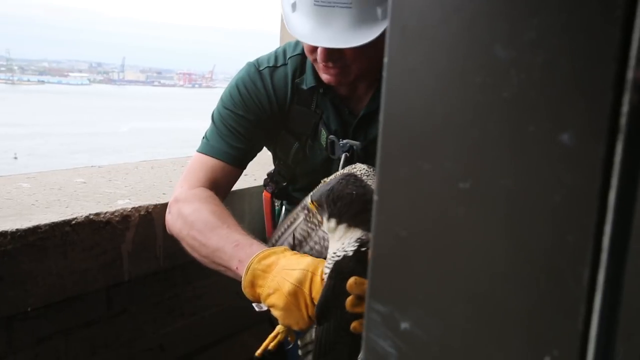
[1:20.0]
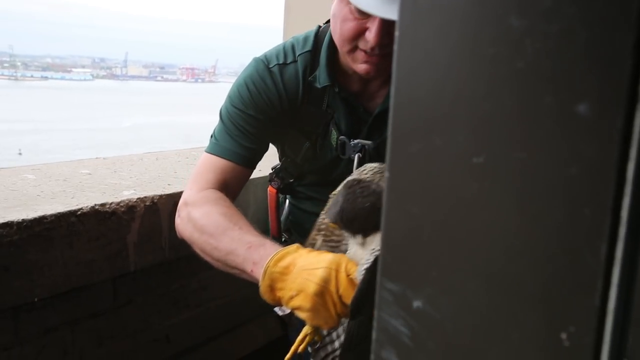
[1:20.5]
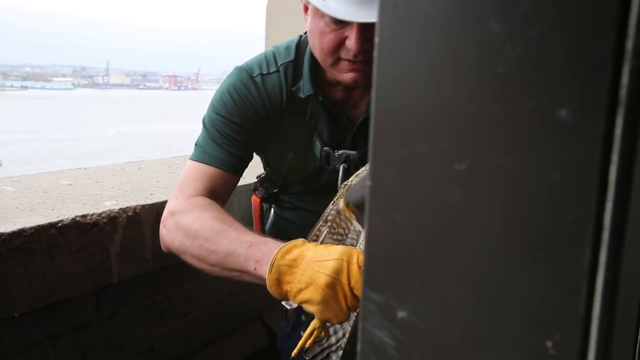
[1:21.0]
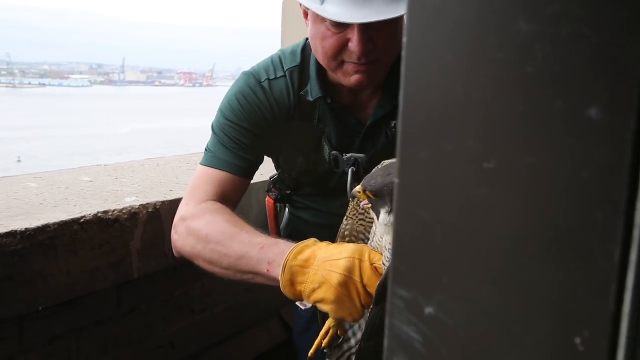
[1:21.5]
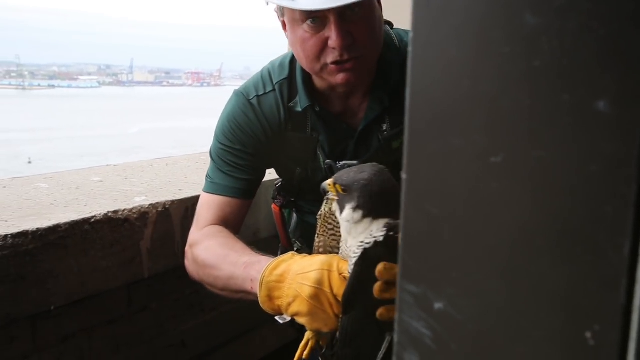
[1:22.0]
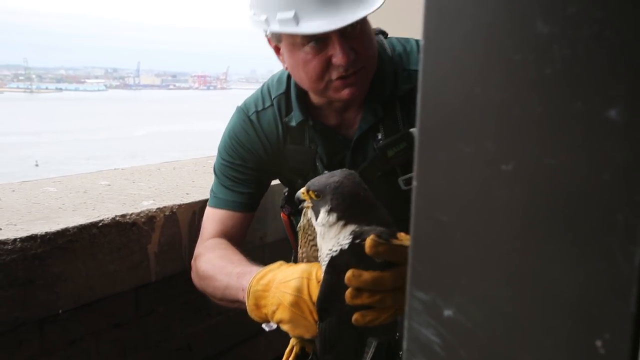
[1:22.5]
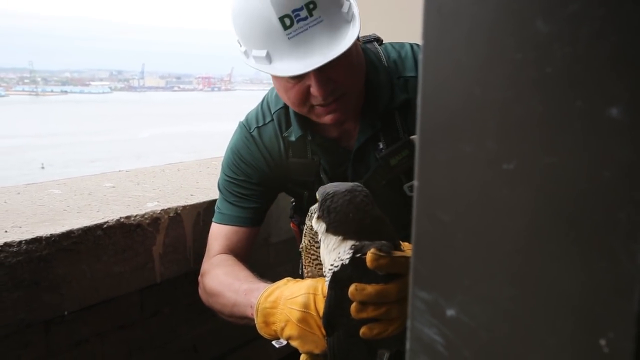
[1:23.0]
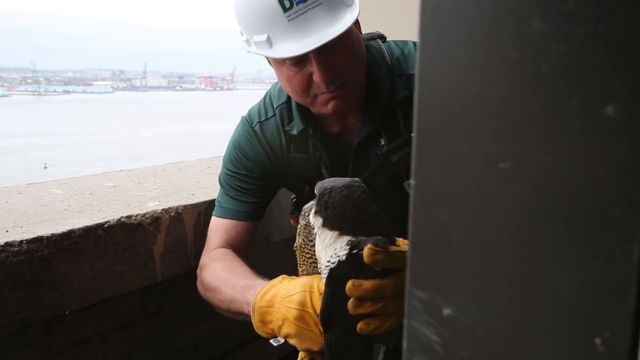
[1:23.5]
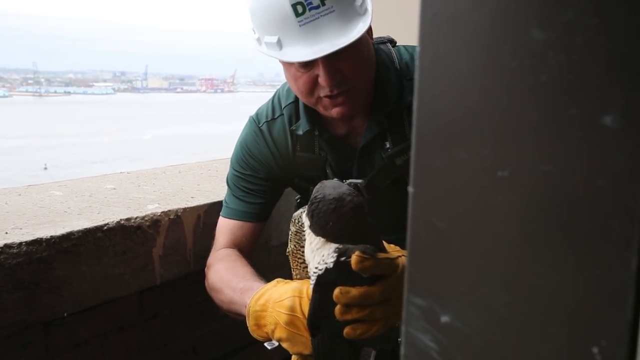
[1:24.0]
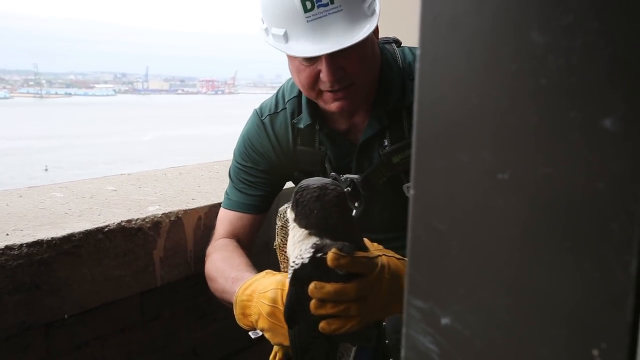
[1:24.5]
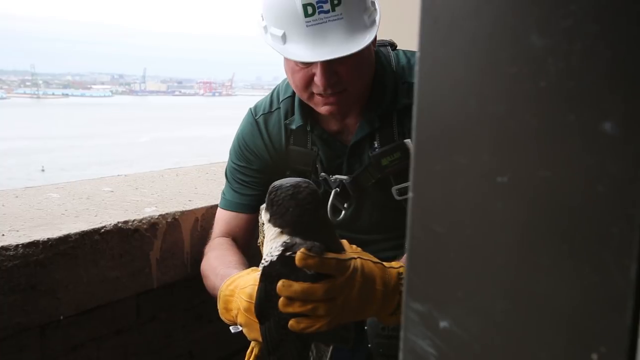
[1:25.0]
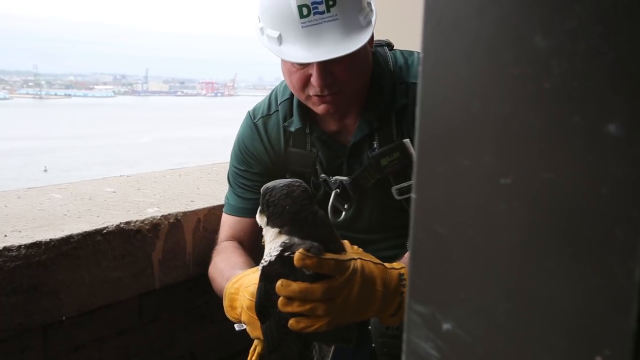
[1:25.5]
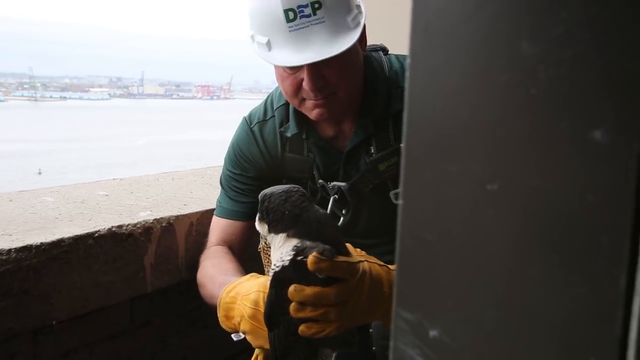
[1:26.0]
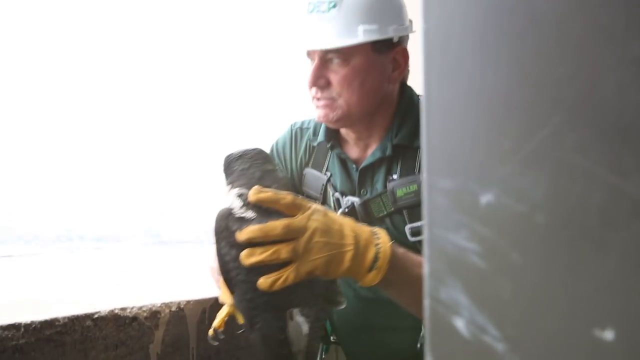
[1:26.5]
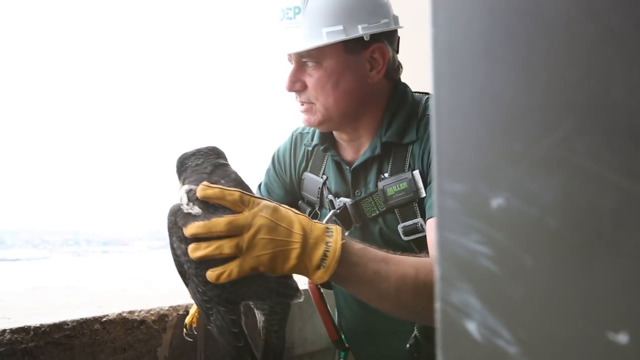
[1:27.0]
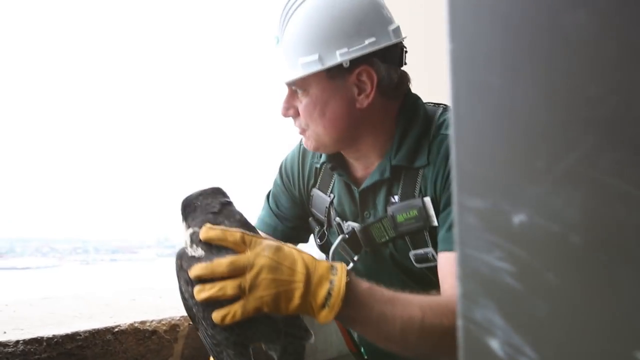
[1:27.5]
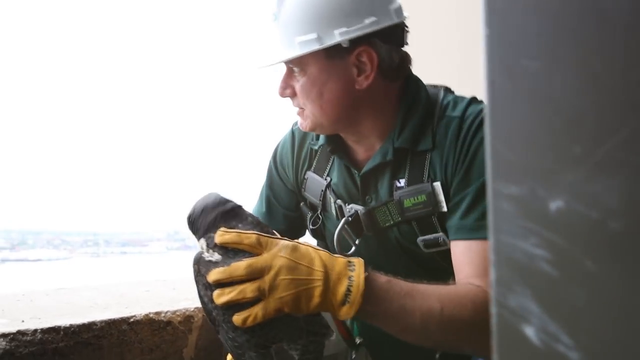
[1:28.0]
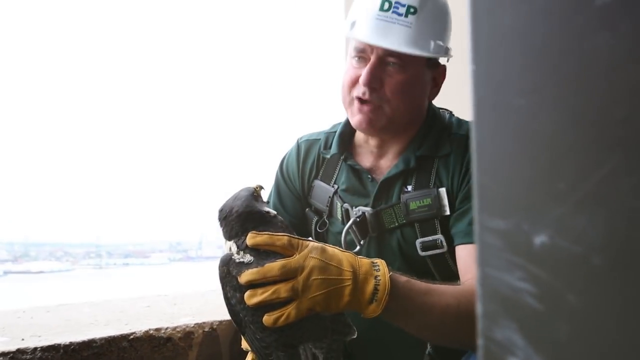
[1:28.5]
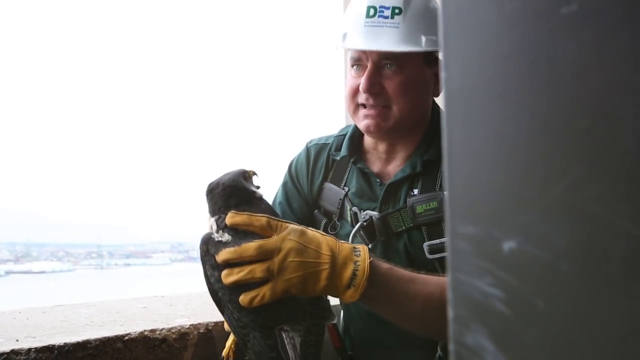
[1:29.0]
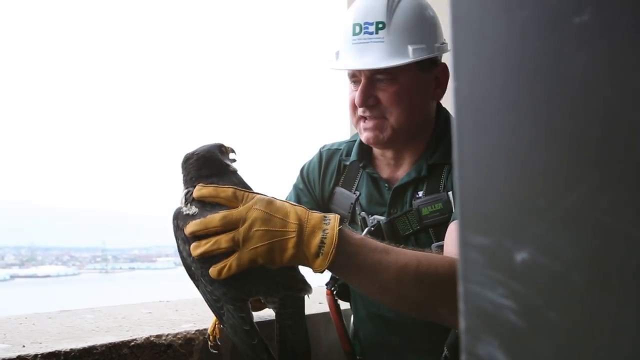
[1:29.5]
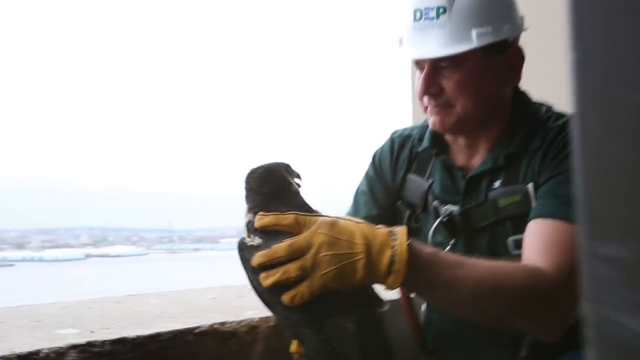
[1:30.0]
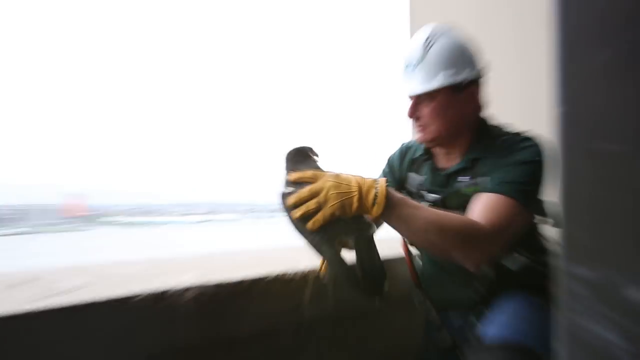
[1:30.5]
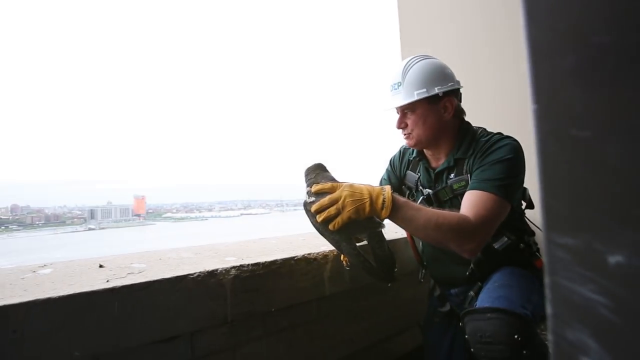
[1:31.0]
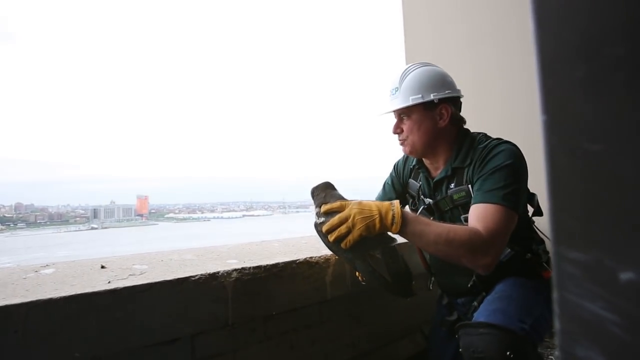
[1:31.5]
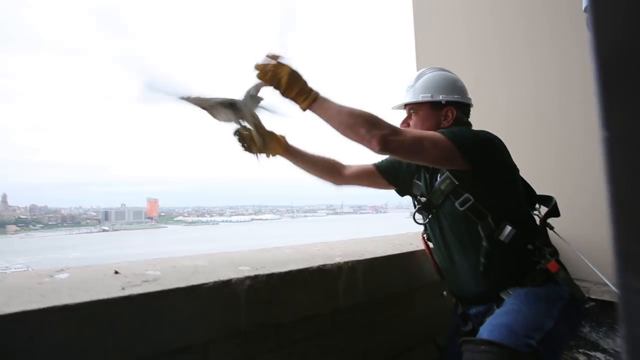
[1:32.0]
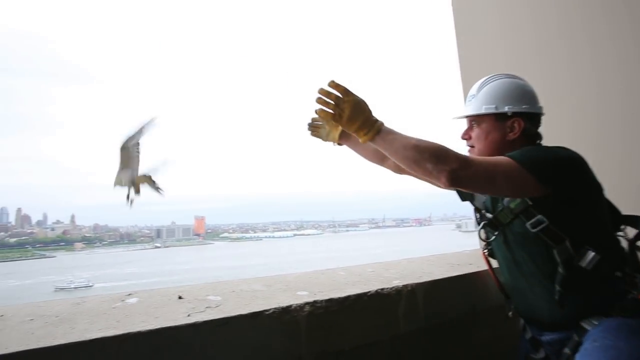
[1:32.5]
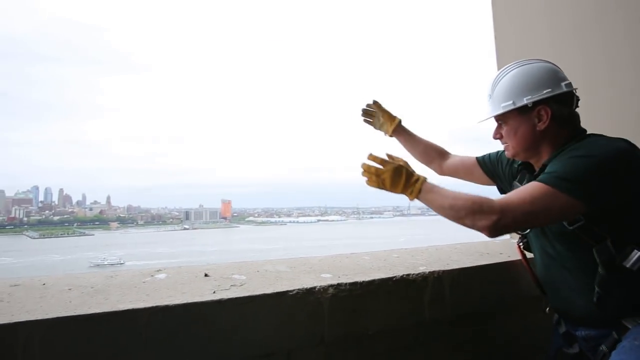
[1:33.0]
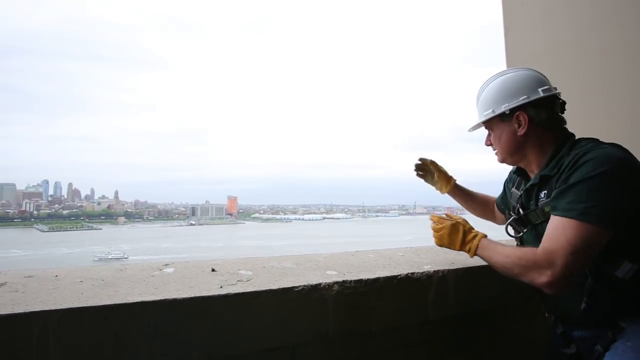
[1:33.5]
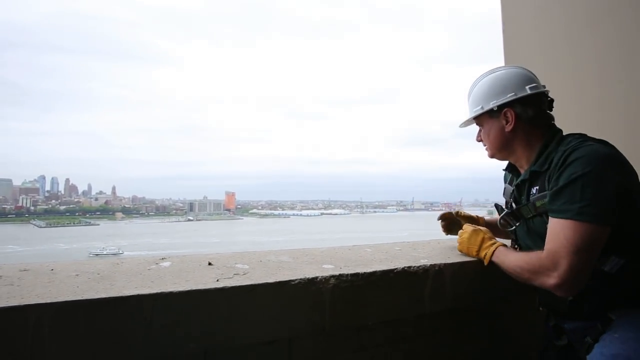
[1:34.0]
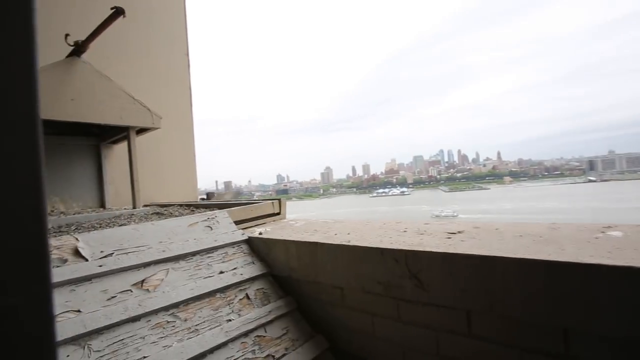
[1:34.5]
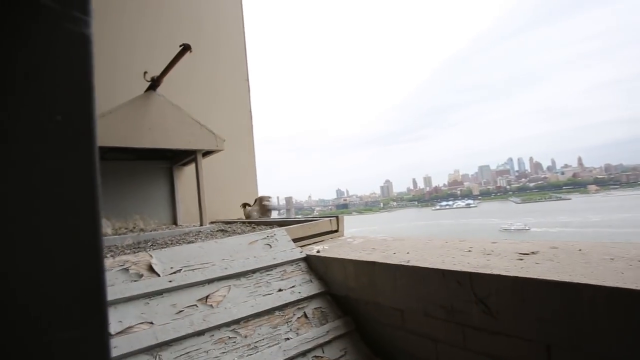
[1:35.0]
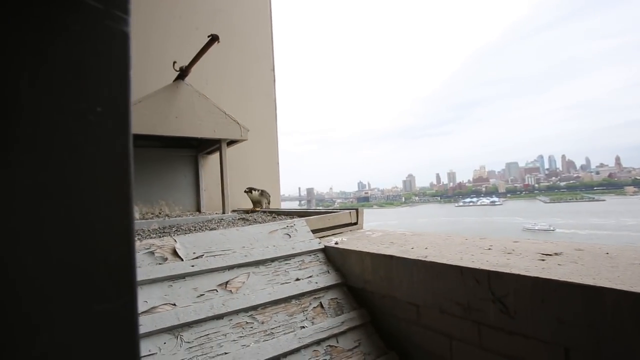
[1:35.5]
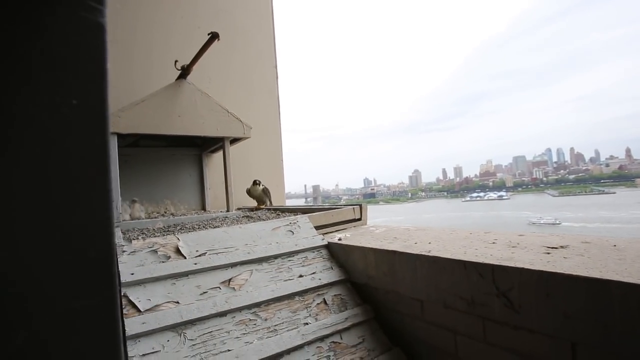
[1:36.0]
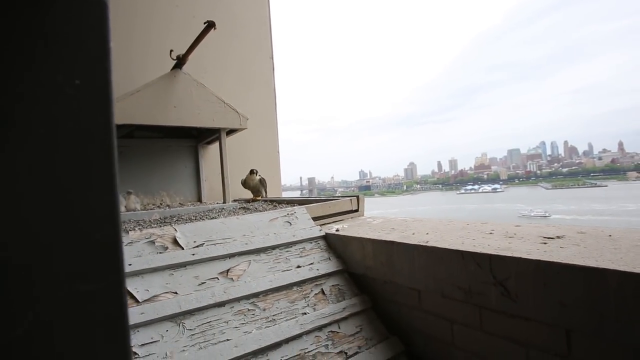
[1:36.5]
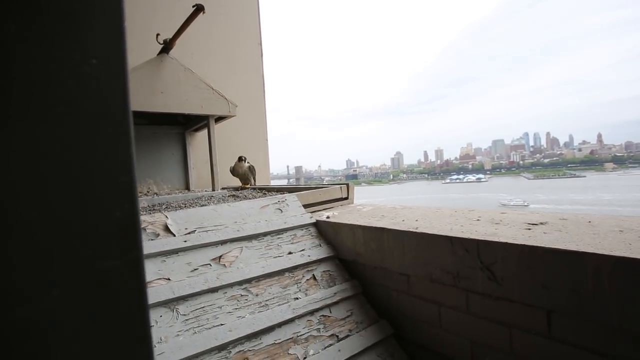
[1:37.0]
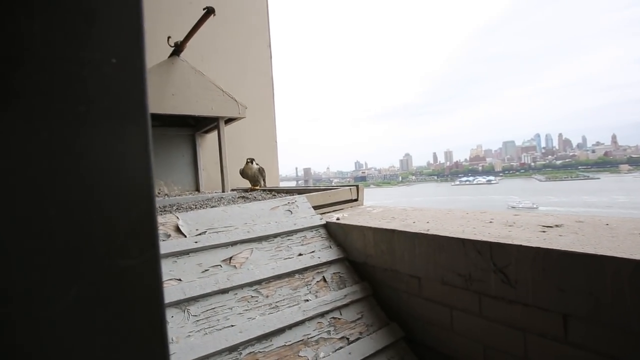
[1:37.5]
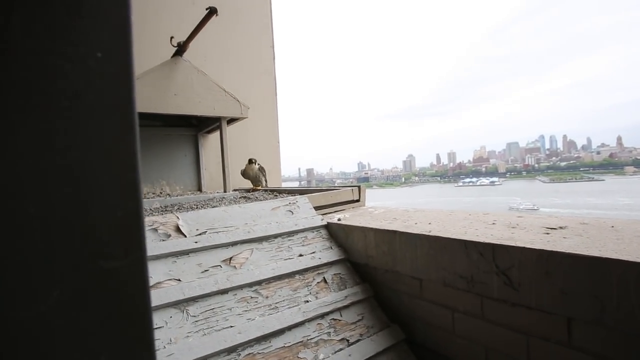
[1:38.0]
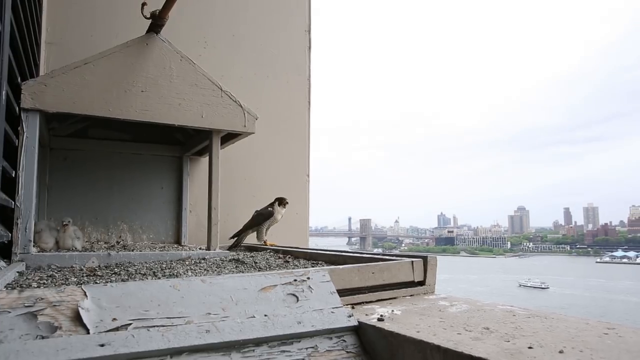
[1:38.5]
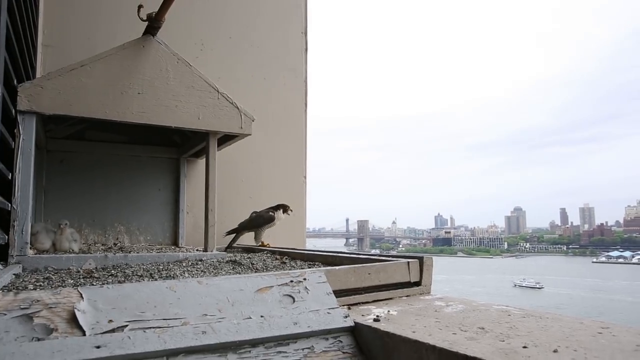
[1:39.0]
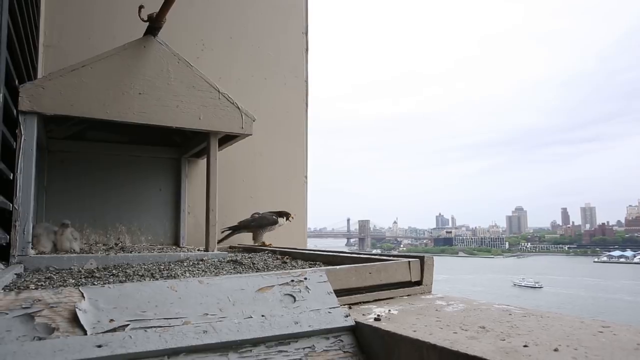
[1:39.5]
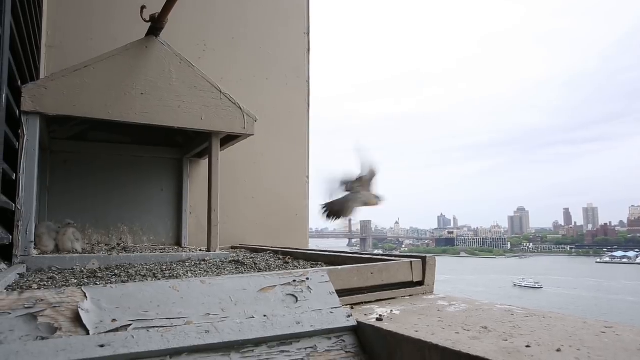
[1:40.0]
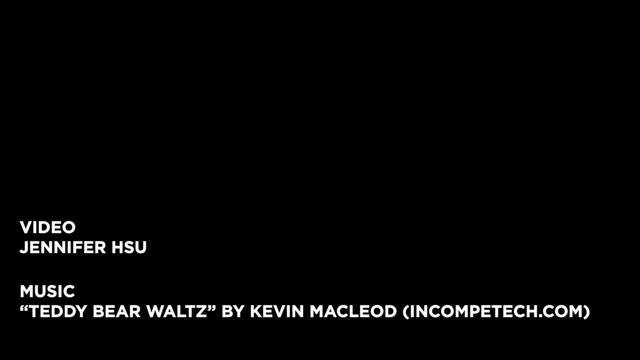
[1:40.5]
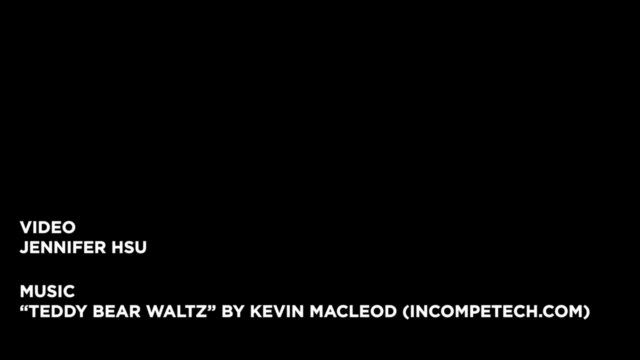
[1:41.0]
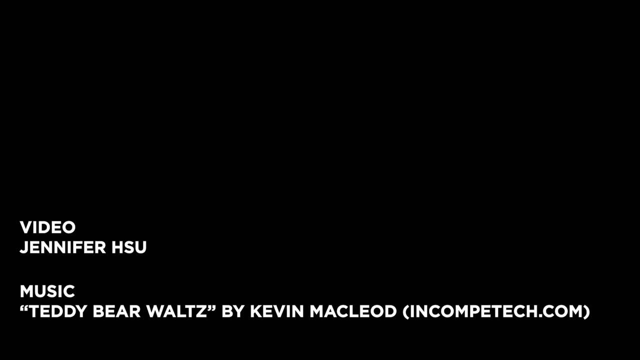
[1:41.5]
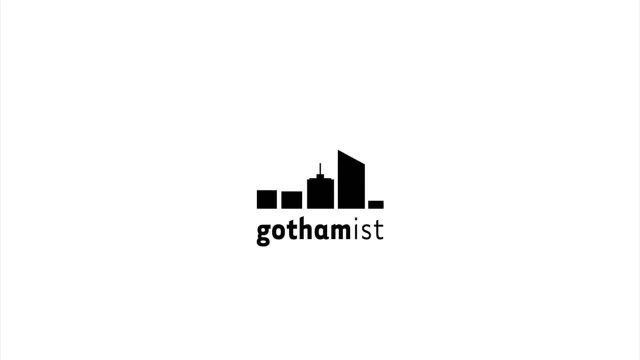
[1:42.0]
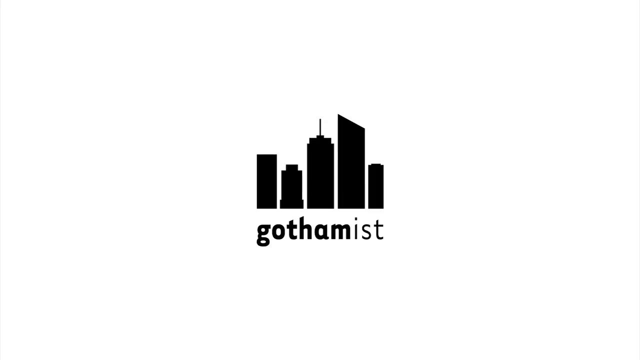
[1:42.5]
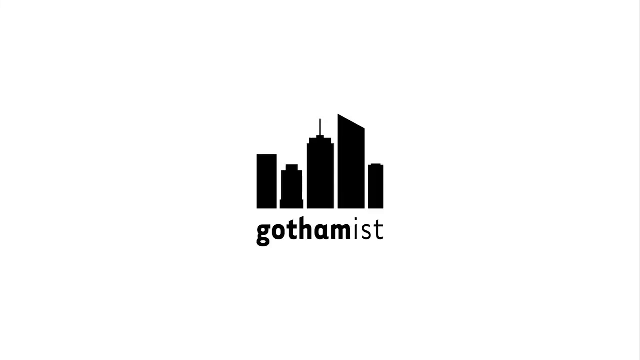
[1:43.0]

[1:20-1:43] A man who appears to be standing on the balcony of a building holds a peregrine falcon. He looks to his left and appears to be speaking to someone. He wears yellow gloves, a short-sleeved green shirt and a white hard hat, and at first holds the falcon firmly with both hands. The perspective shifts slightly and he looks at someone straight ahead of him, talking. He then releases the peregrine falcon over the side of the balcony or ledge he is on. The falcon lands on what looks like a coop built on the side of the building, with some peregrine falcon chicks inside. The large falcon perches on the end of the ledge and then starts to fly off. In the background is what looks like the Brooklyn Bridge and a river, with a cityscape beyond. The picture fades to black and credits read "Video: Jennifer Hsu" and "Music: Teddy Bear Walls by Kevin MacLeod (Incompetech.com)". Finally an end card shows silhouettes of five black skyscrapers with "Gothamist" below them.